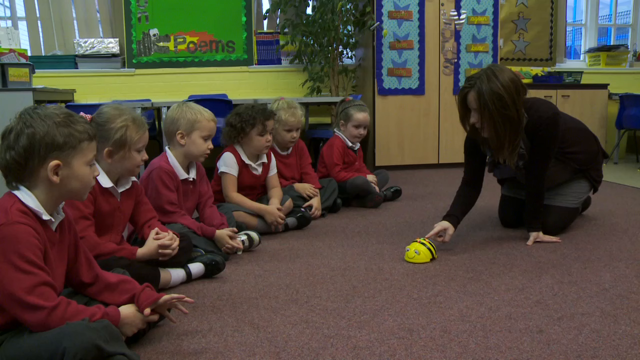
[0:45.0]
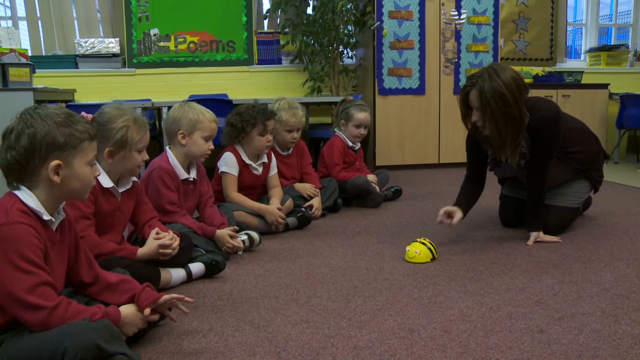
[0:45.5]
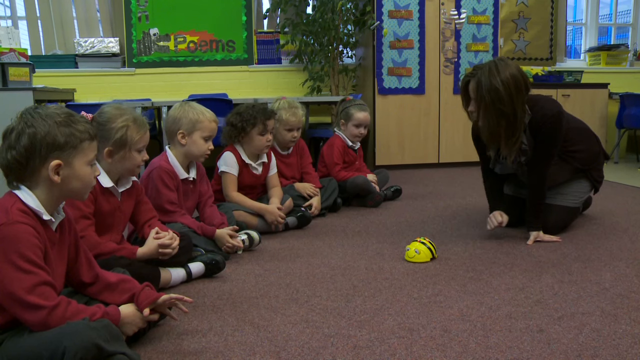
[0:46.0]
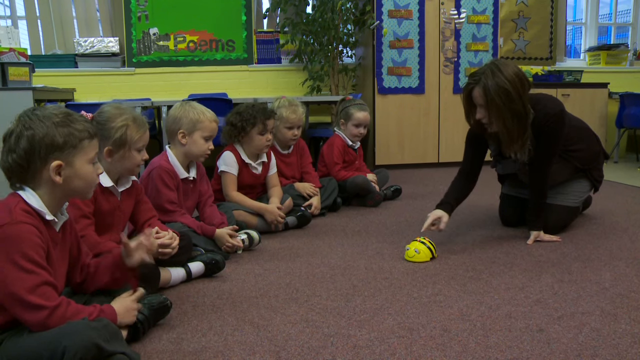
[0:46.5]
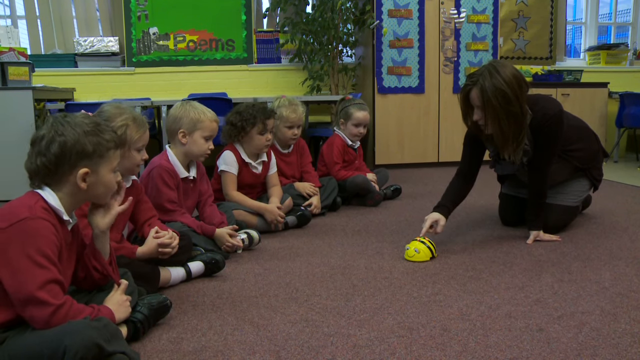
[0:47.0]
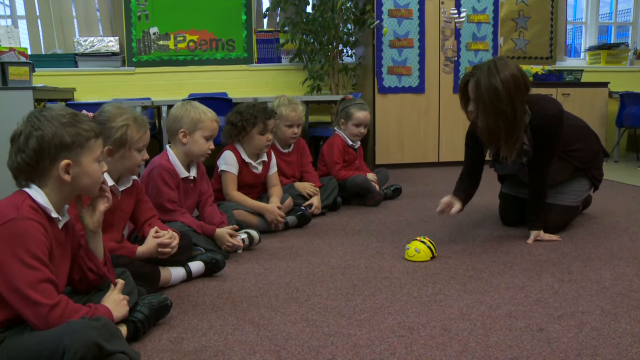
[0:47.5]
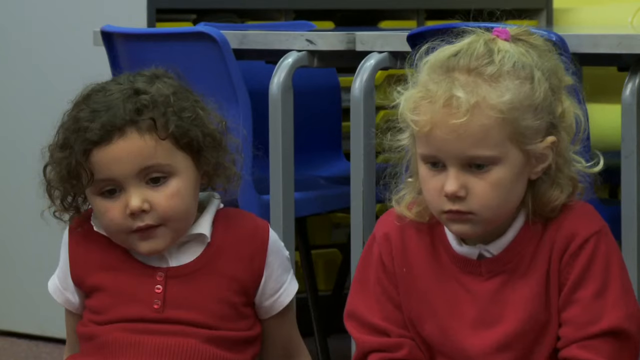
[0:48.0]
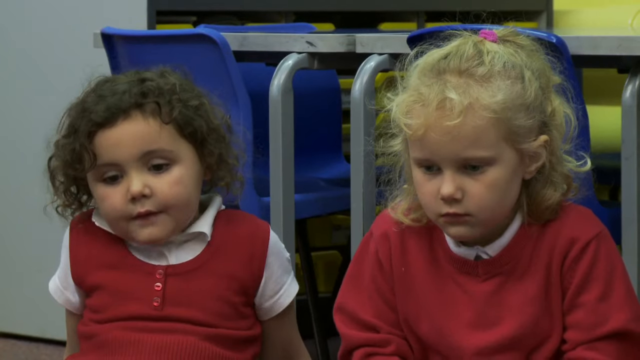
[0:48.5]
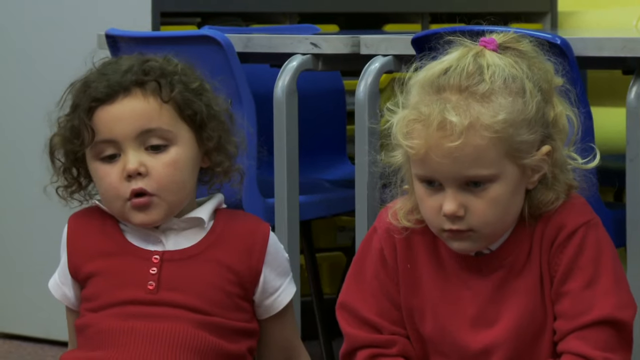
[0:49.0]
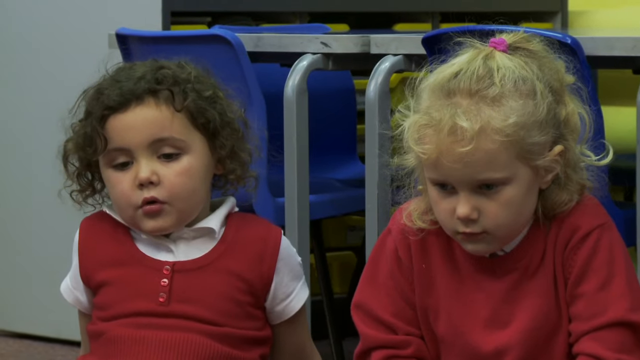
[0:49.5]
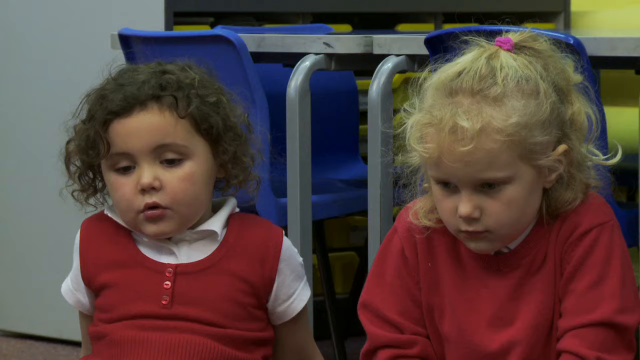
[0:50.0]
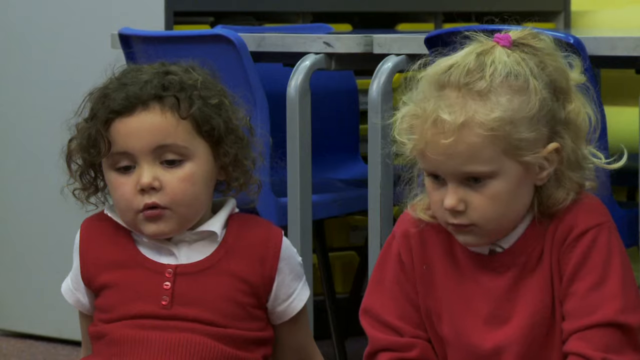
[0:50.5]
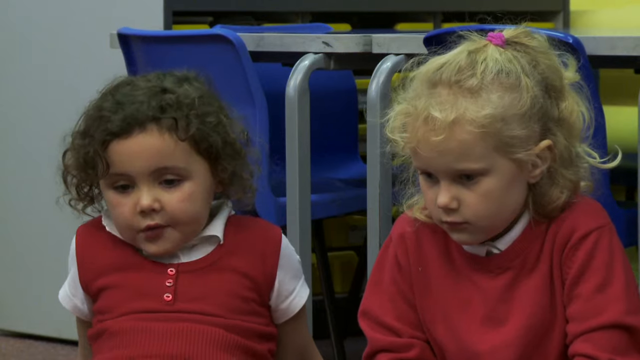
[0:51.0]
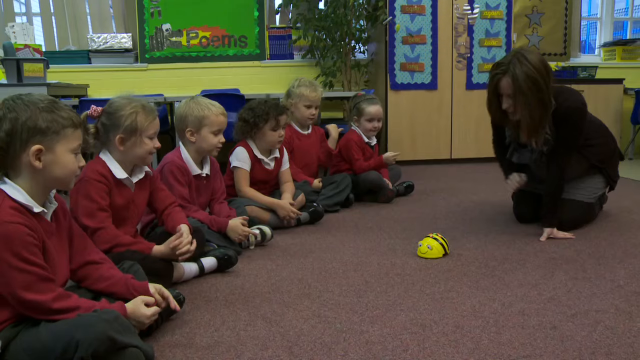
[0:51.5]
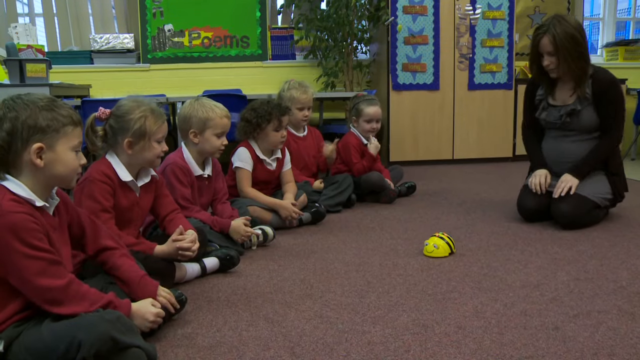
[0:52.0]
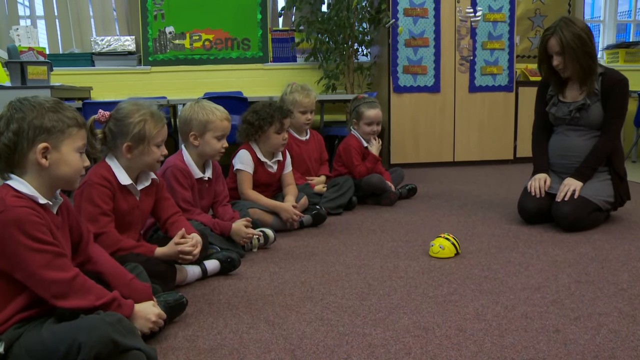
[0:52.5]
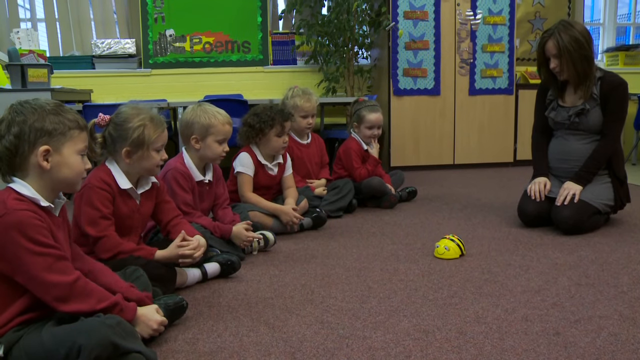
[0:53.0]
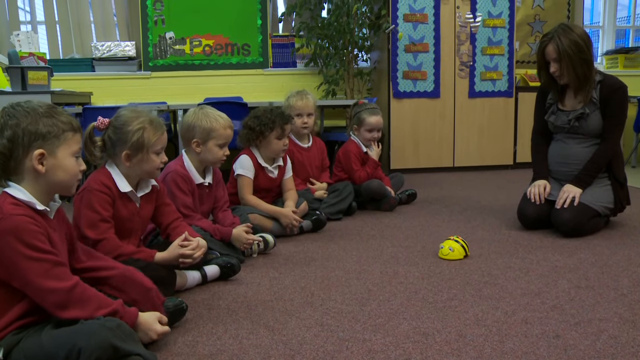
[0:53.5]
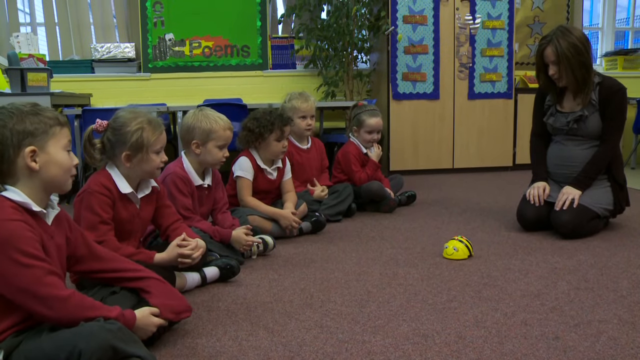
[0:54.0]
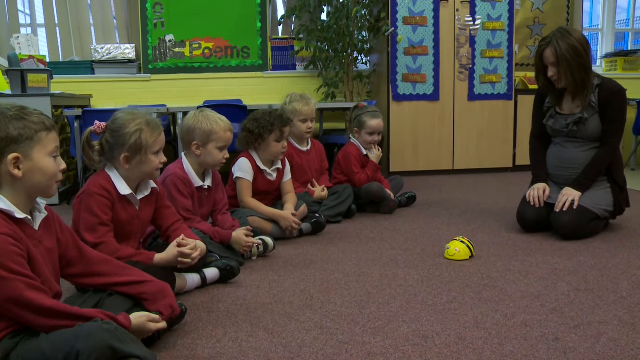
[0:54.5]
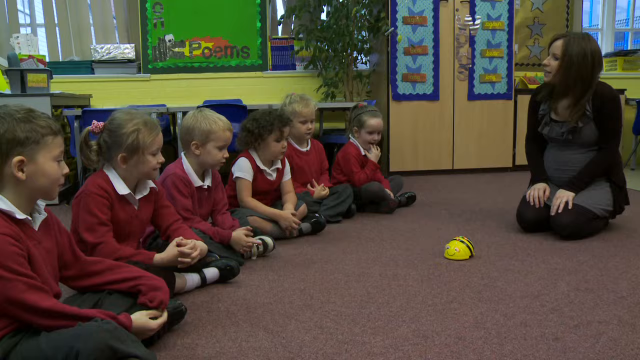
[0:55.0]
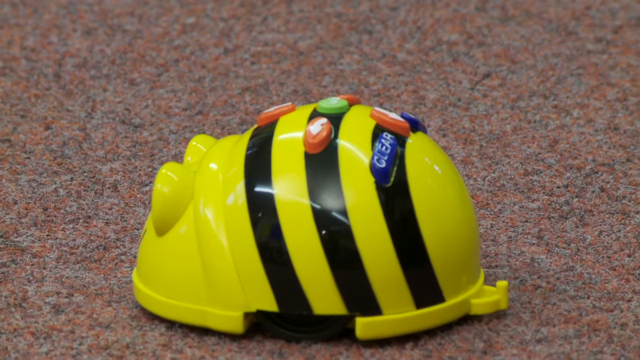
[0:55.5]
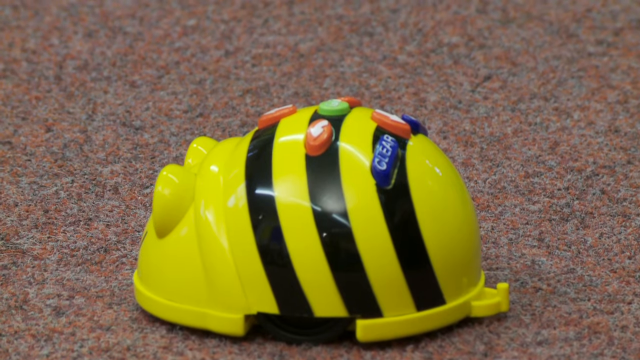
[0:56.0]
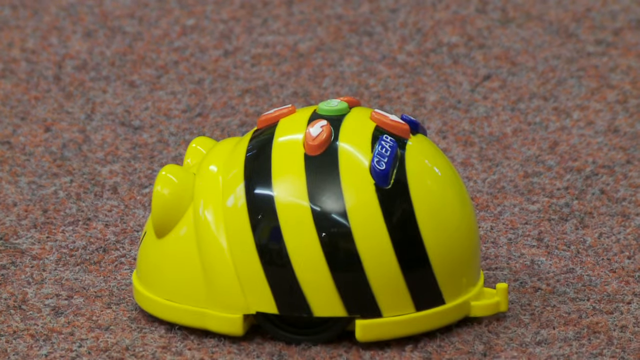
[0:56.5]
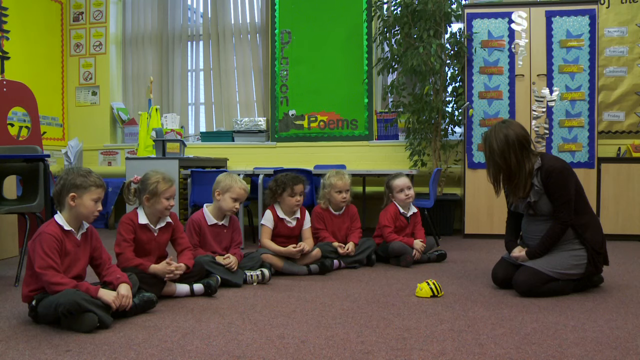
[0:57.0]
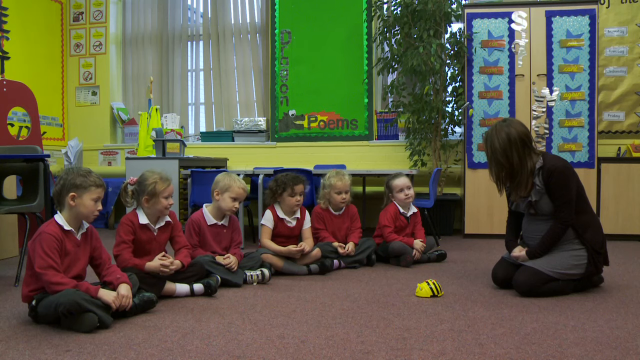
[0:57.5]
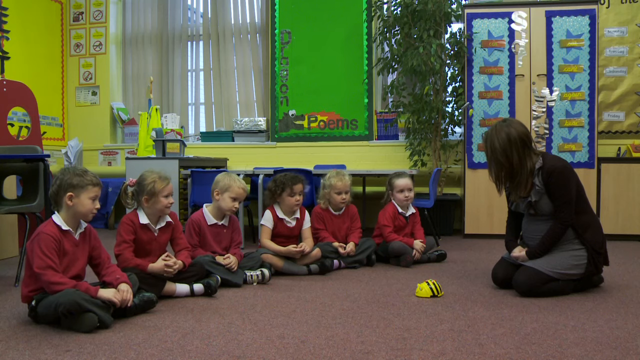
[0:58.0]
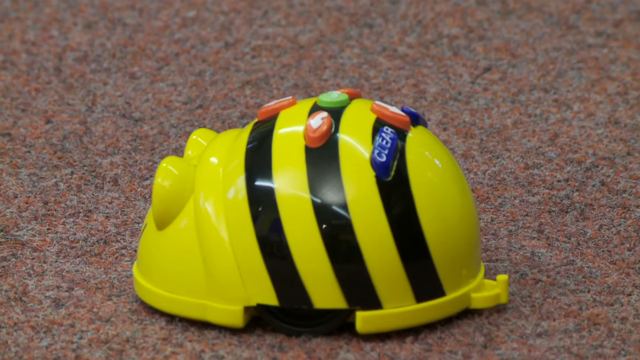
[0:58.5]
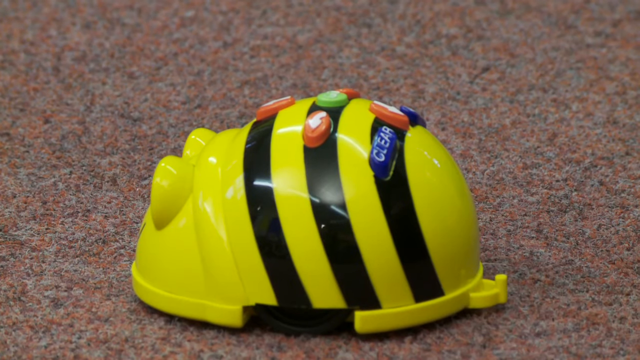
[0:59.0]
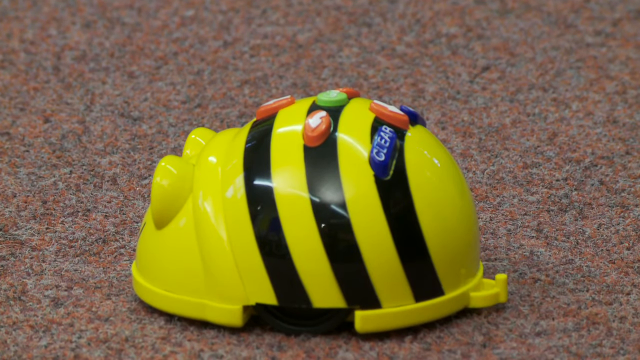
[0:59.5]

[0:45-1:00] The woman pushes buttons on the bee bot and looks towards the group of children to see their reactions. When she presses the button this time, the robot reverses, moving away from the children and back towards her. The camera pans to the faces of different children, who are still very interested in what the robot is doing. The woman appears to be asking questions or engaging in a discussion with the children as she continues the demonstration. The children reply, but for the most part their focus is on the robot on the floor.